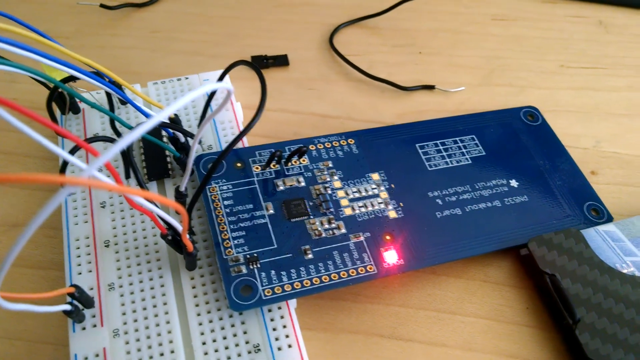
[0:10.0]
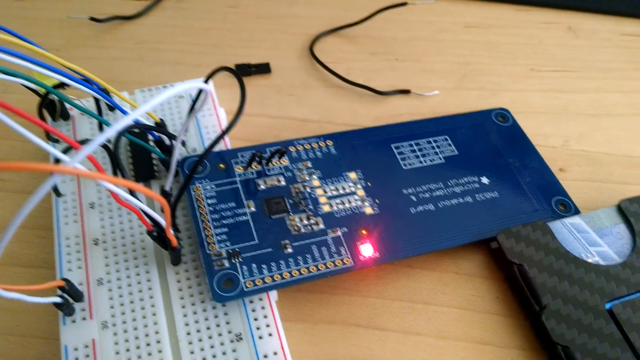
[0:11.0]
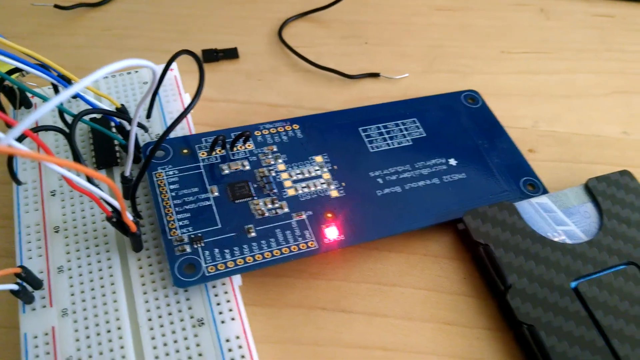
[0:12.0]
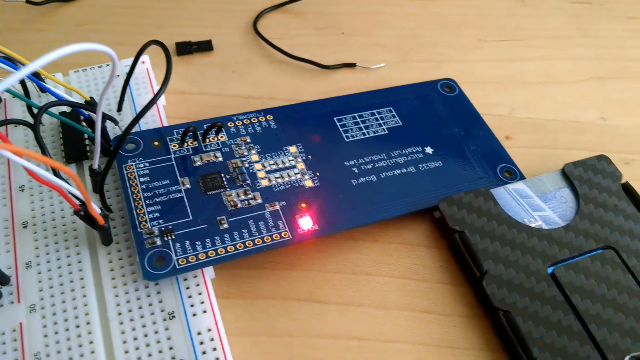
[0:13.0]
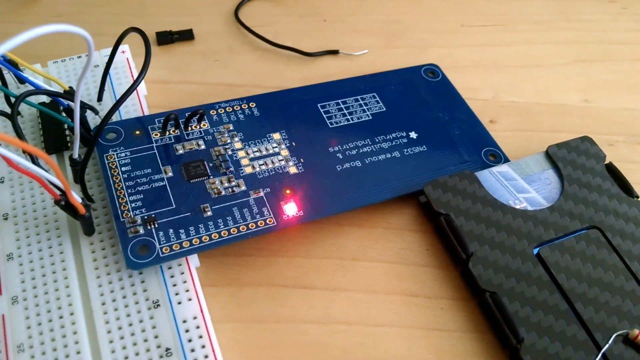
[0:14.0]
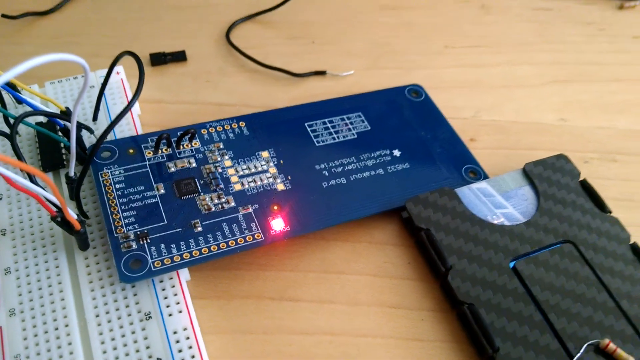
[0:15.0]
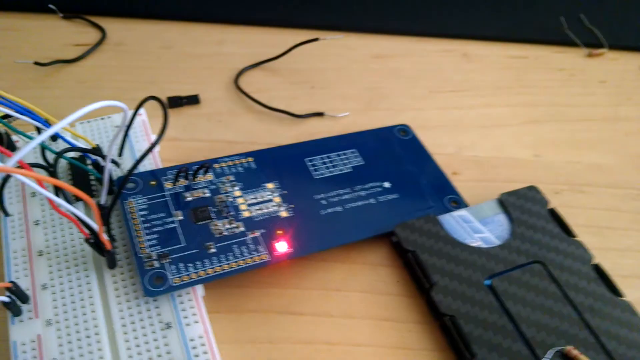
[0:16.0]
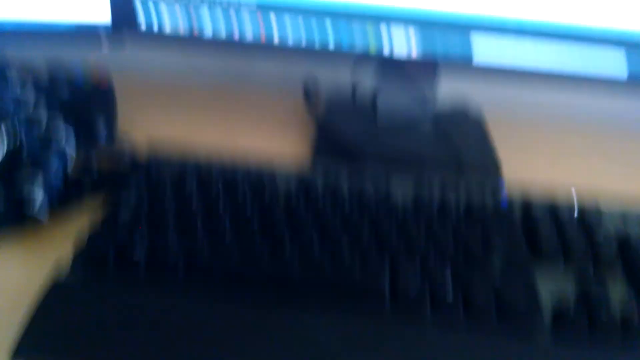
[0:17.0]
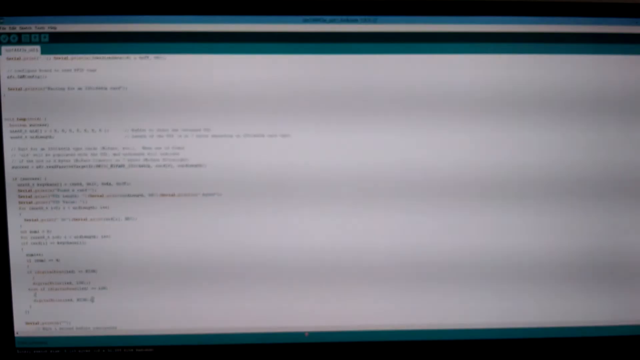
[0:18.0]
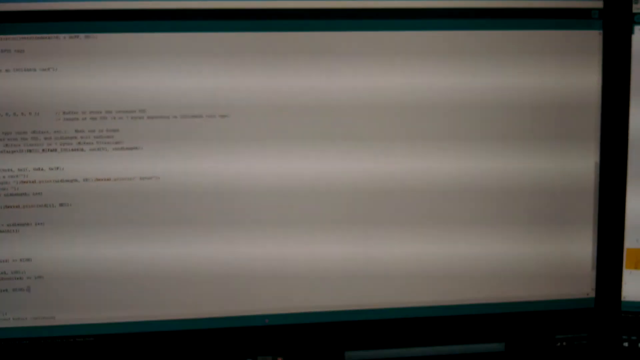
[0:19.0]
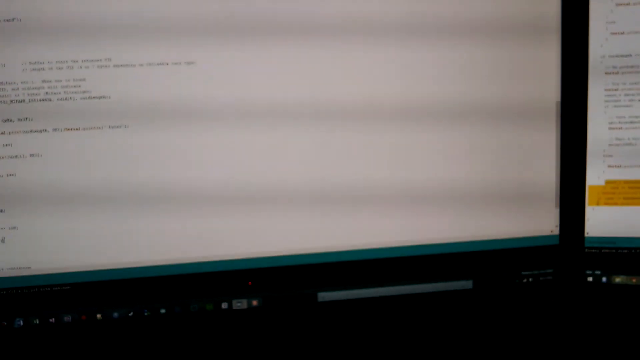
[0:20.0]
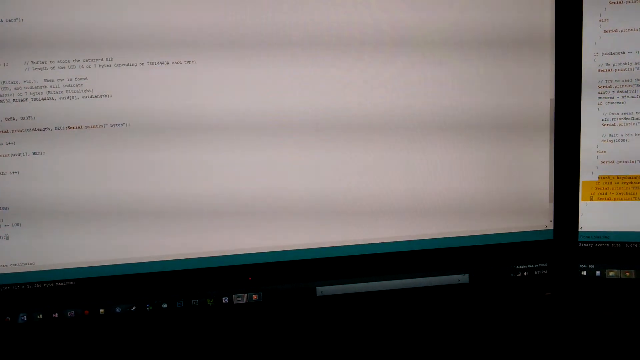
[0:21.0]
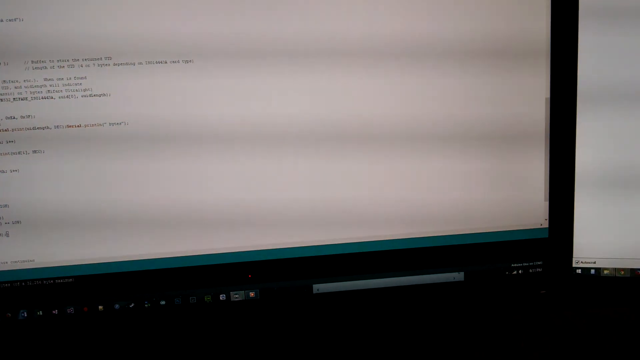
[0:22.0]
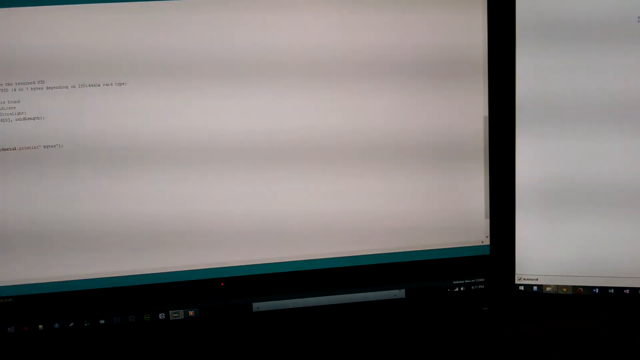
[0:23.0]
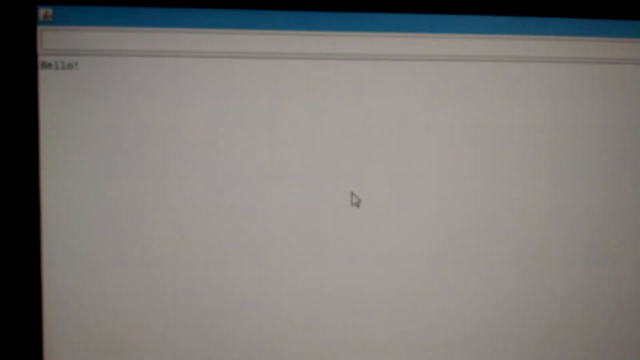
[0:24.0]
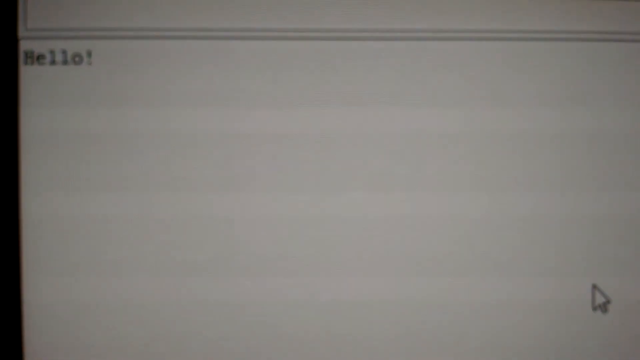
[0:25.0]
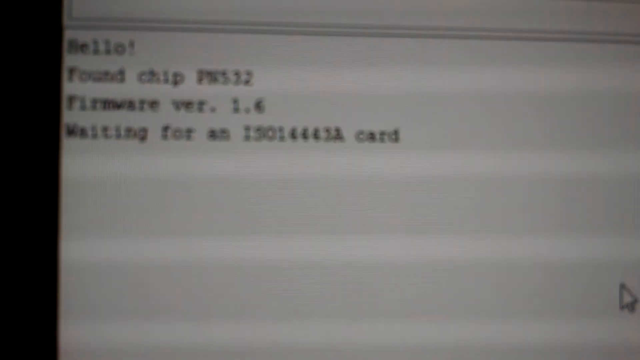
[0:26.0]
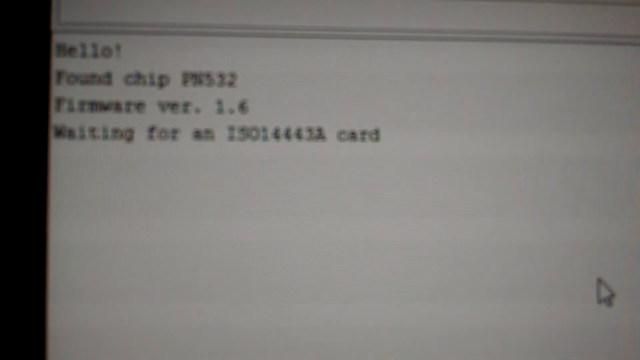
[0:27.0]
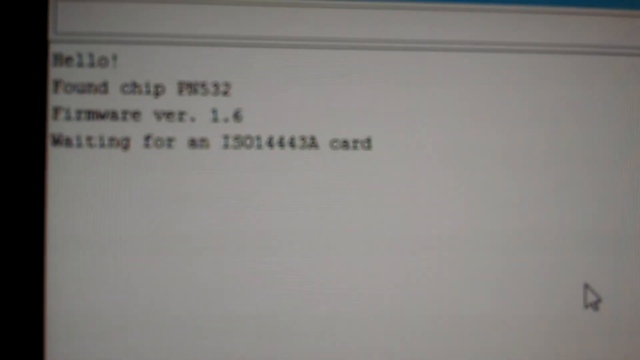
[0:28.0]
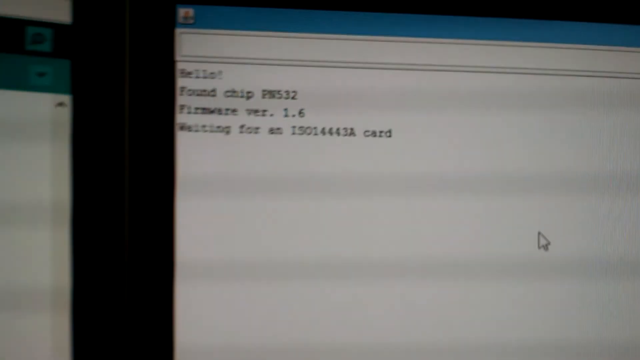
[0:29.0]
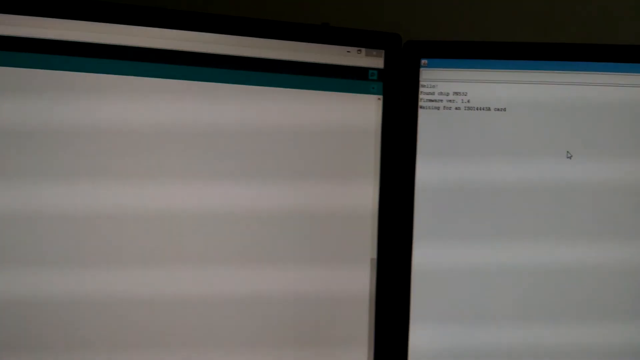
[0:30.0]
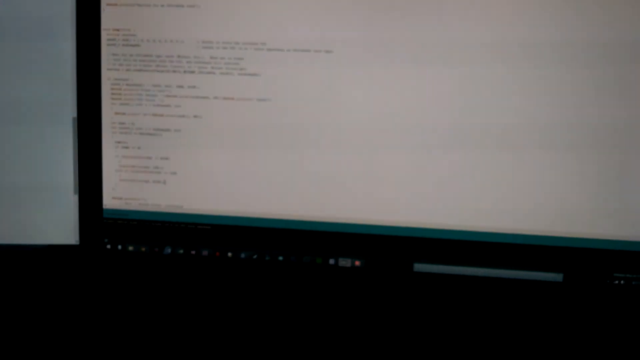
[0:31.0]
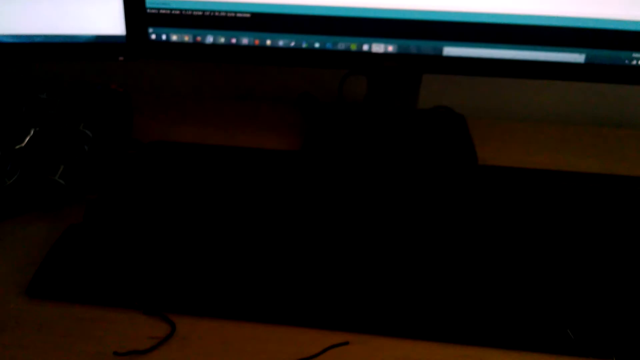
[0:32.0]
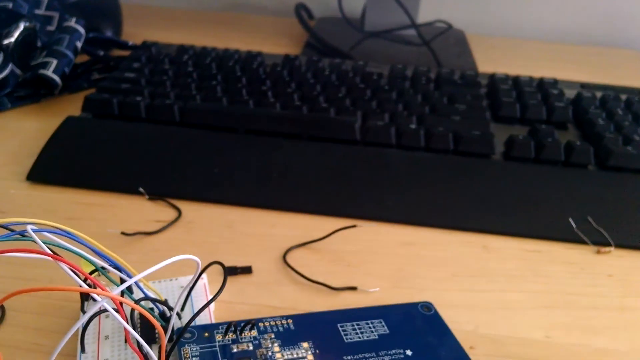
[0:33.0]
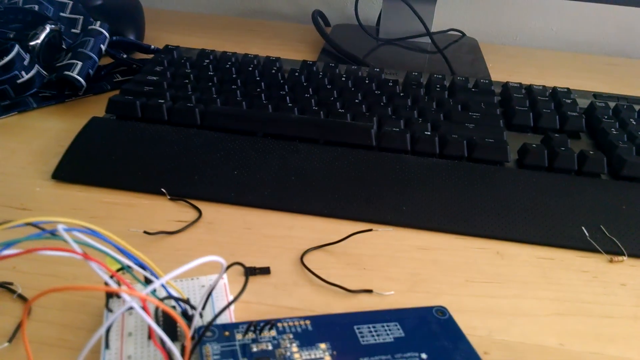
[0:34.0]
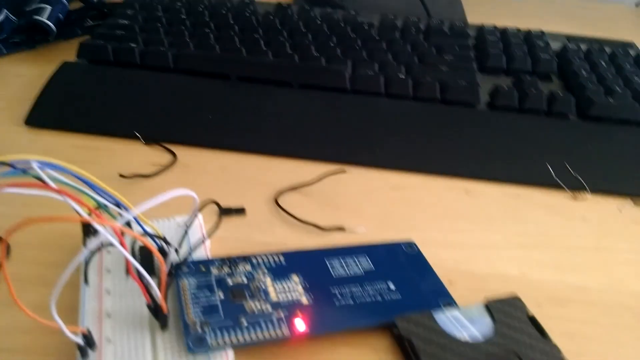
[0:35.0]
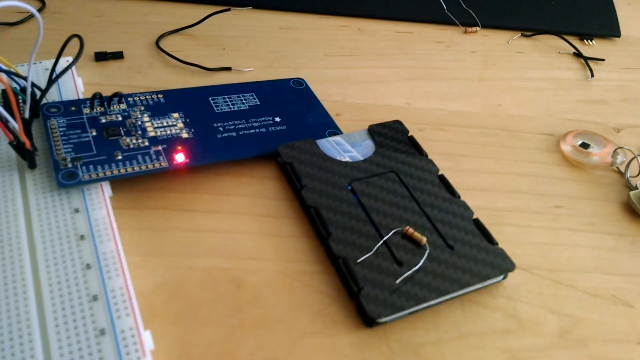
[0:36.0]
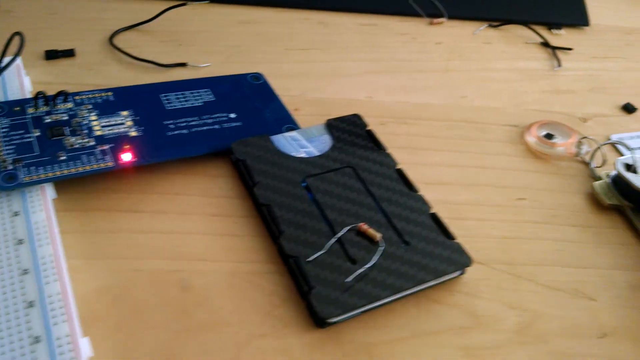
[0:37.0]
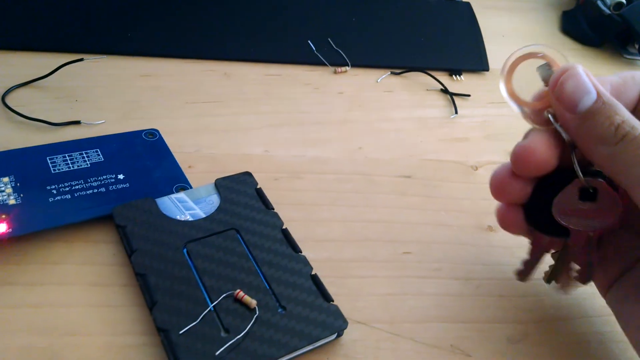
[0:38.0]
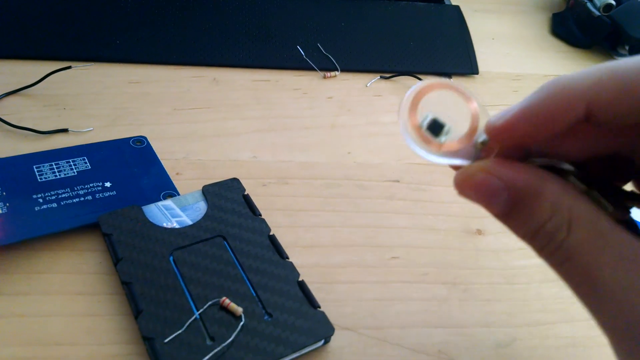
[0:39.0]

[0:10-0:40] The same boards apparently continue to be powered by the white board. One of them looks like it is attached directly to it, not just through the wires. The wires arch in various U-shapes and connect to the white part. The camera is pointed at computer screens, which are hard to see because the recording makes a lot of black lines appear on them, leaving only a very blurry picture. Text appears reading "hello, found chip, PX532 firmware version 1.6, waiting for an ISO card". The camera then returns to the device, and the person grabs some keys that are right next to the machine on the desk.